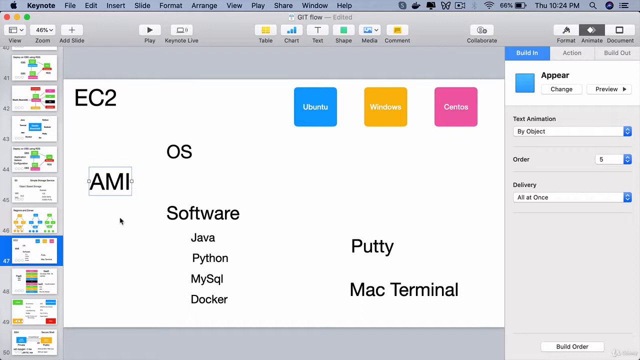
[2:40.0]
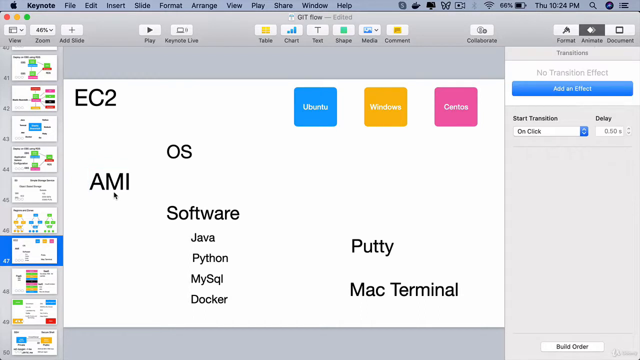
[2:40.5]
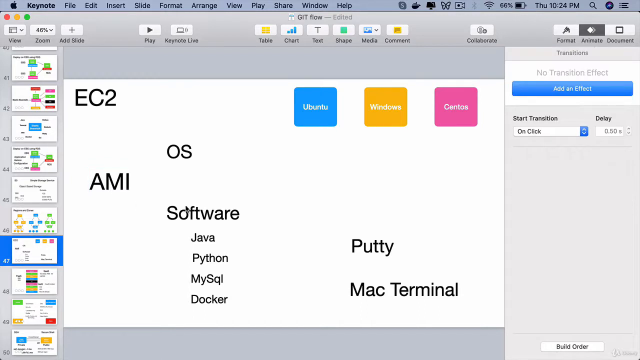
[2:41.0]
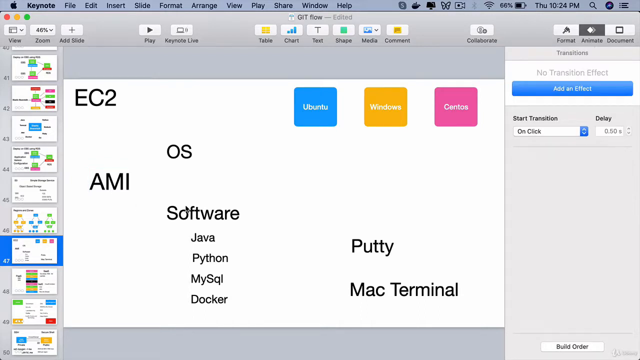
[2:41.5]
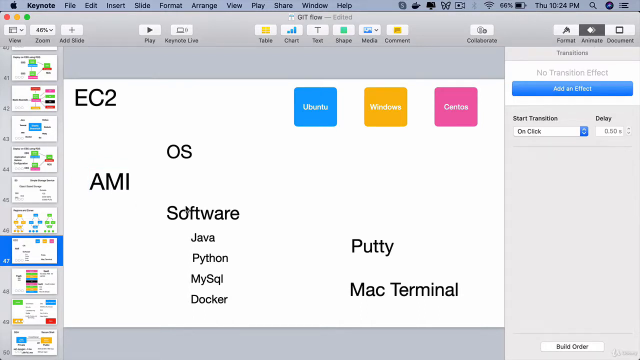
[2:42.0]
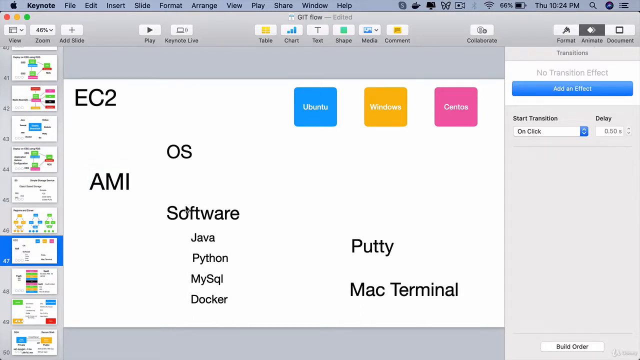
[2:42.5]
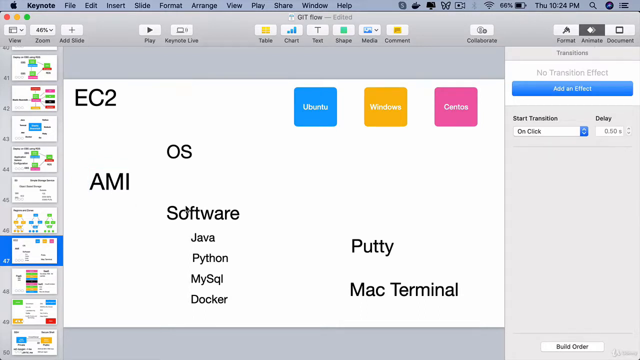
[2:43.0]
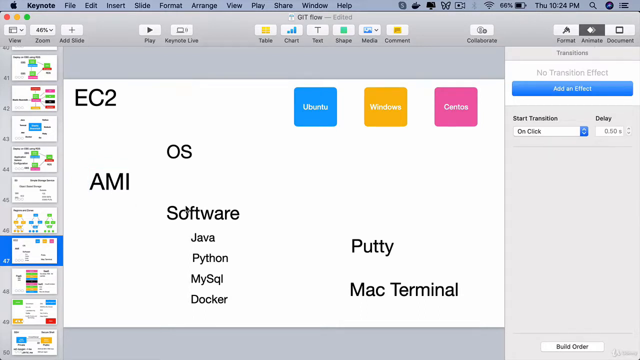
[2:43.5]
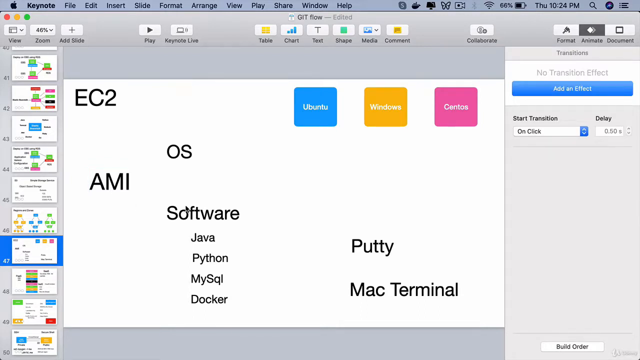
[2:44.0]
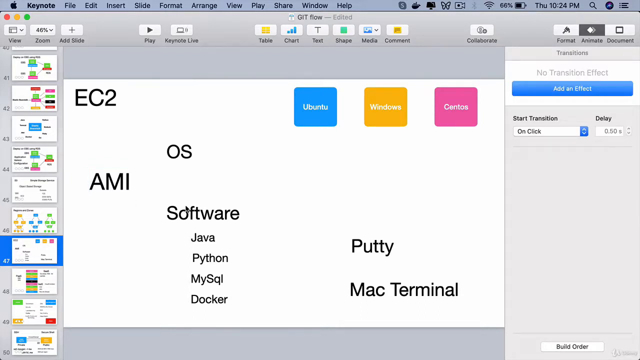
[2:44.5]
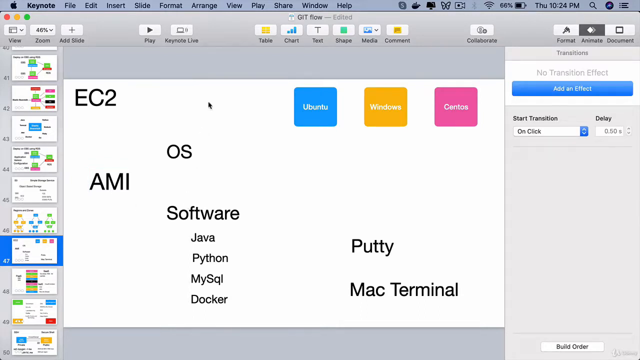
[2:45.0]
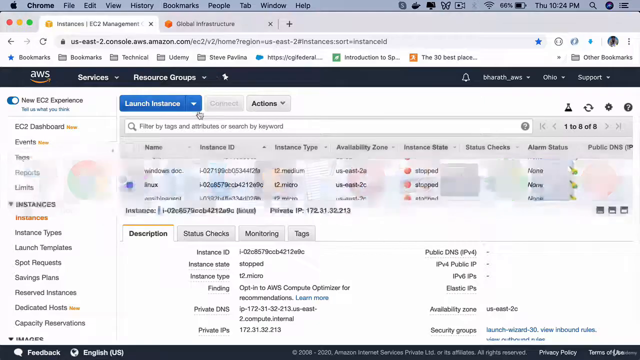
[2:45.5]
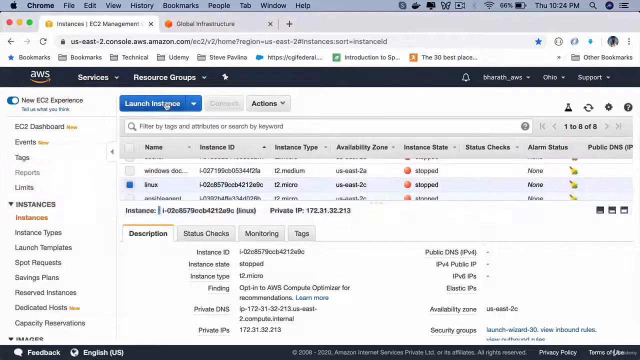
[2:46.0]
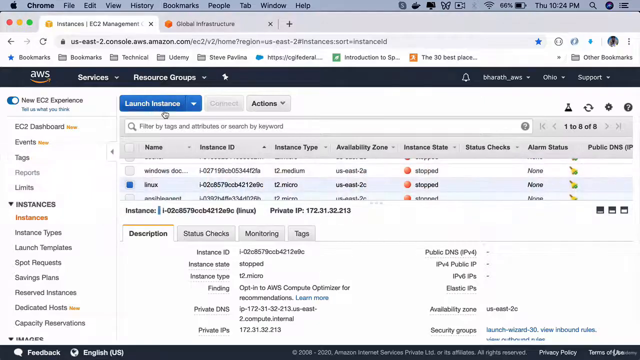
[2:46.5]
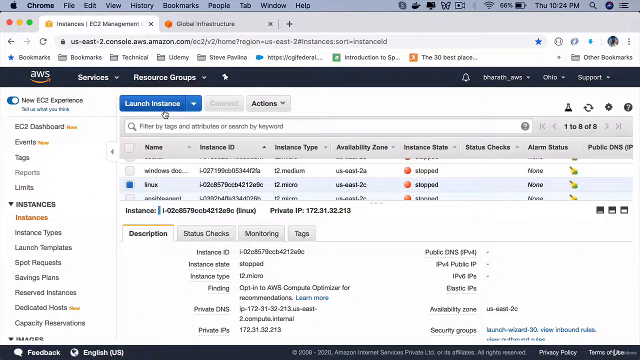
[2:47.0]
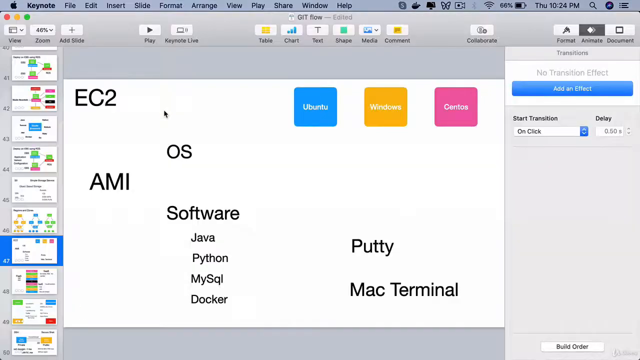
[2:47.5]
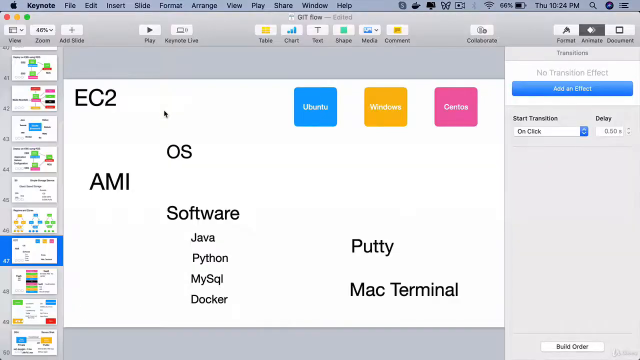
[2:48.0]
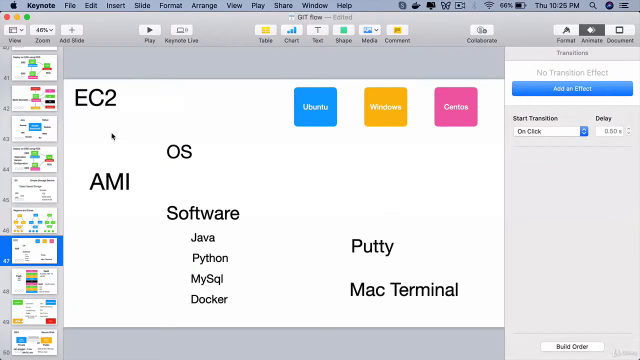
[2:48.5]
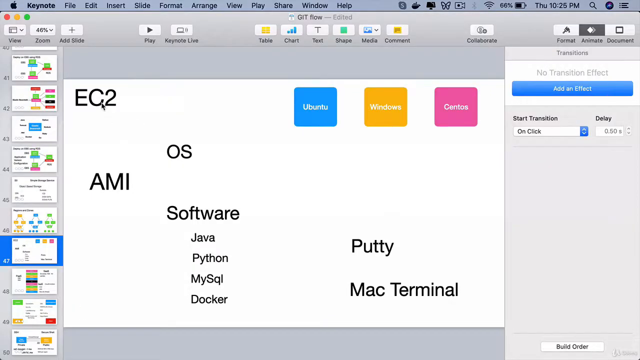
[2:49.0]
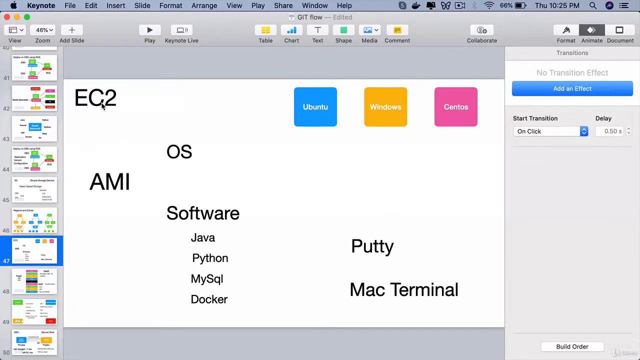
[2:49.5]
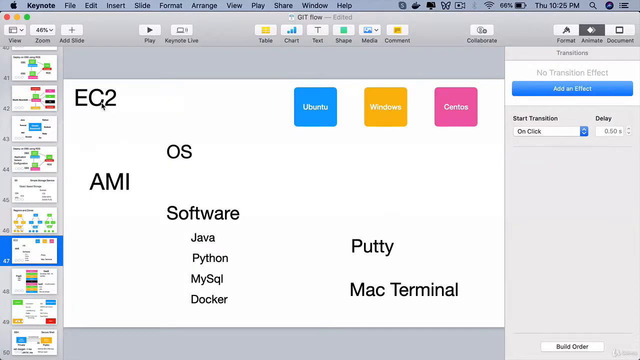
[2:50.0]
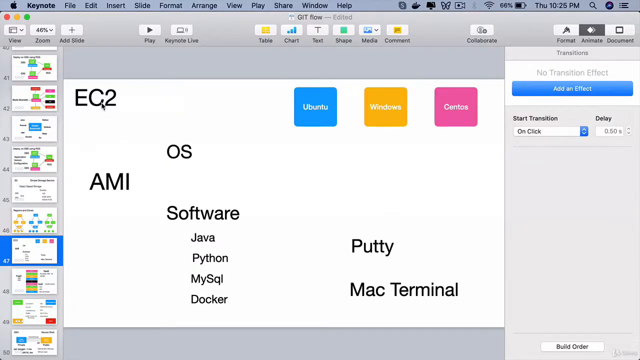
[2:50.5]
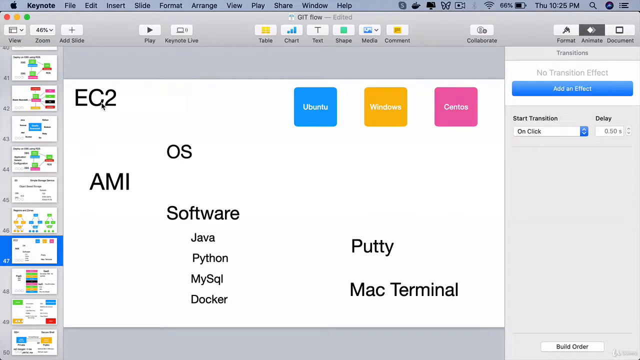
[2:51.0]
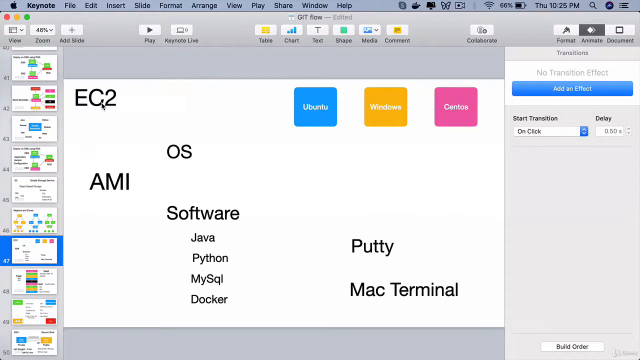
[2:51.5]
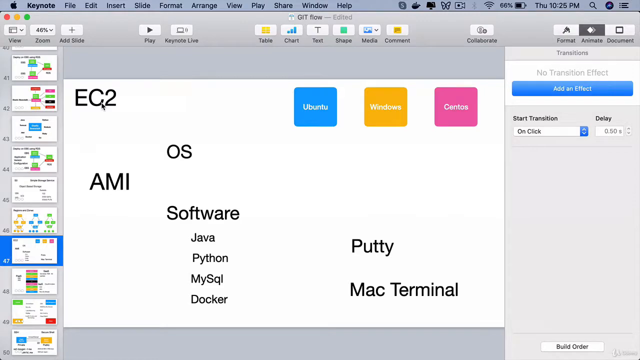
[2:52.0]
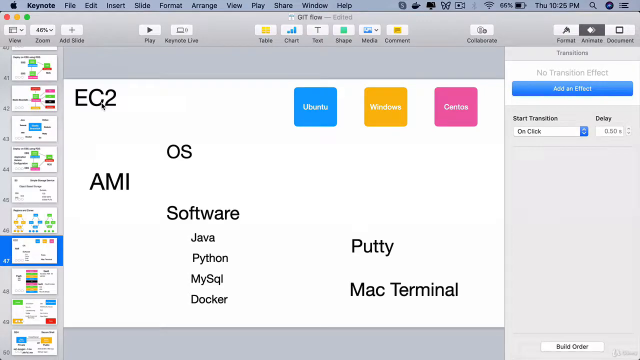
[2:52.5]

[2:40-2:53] Someone's Mac desktop appears in the slightly wide video, with a menu bar at the top reading File, Edit, Insert, Slide, Format, Arrange, View, Play, Share, Window and Help. What is open below it looks like a slide, in the center of the screen. The slide says "EC2" in the upper left and "AMI" just a bit below it, indented a little. Between the two and to the right it says "OS", and to the lower right of "AMI" it says "Software", with "Java", "Python", "MySQL" and "Docker" under that. In the lower right-hand quadrant of the slide it says "PuTTY", with "Mac Terminal" under it, and above that are three colorful boxes.